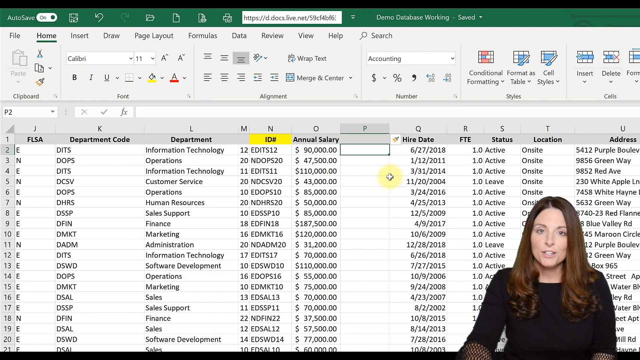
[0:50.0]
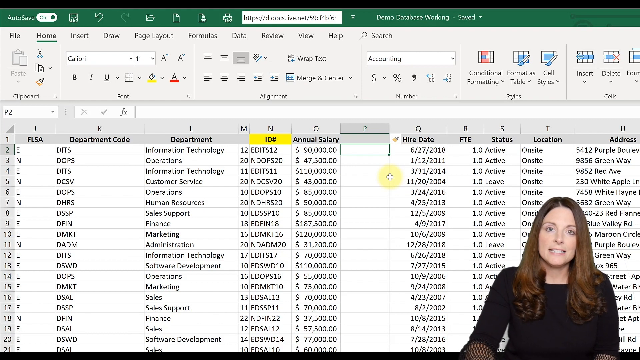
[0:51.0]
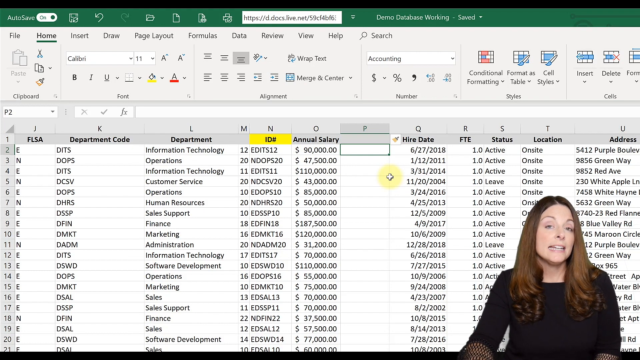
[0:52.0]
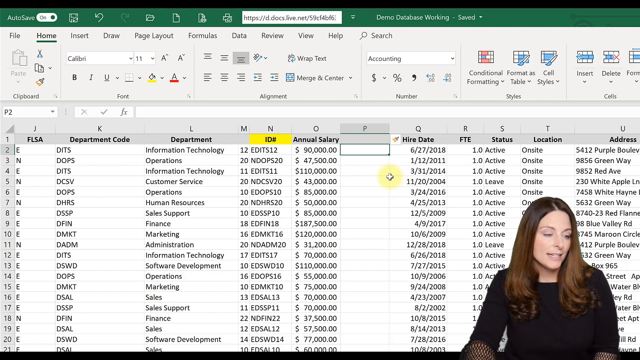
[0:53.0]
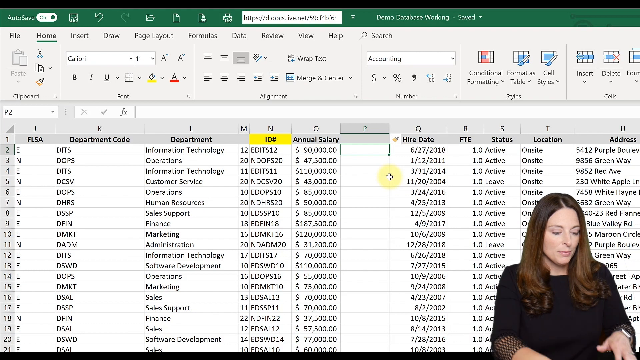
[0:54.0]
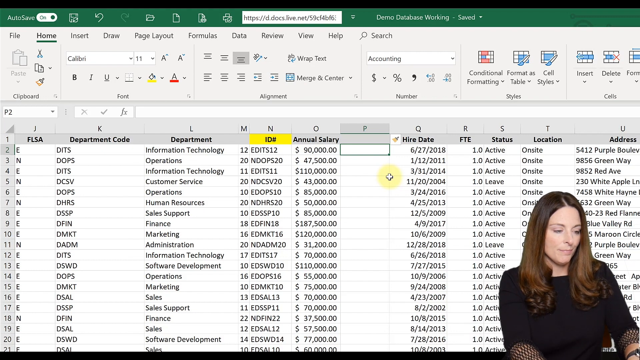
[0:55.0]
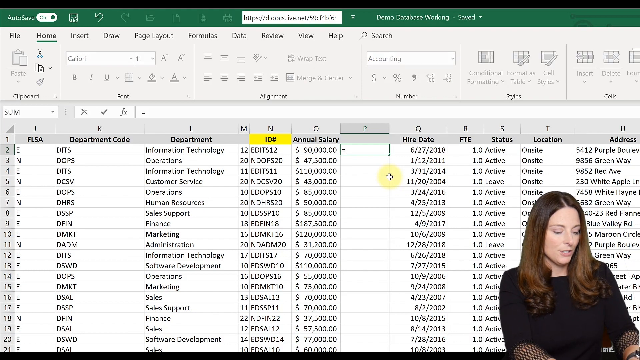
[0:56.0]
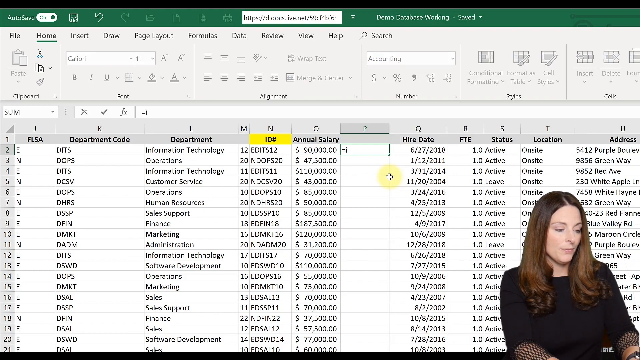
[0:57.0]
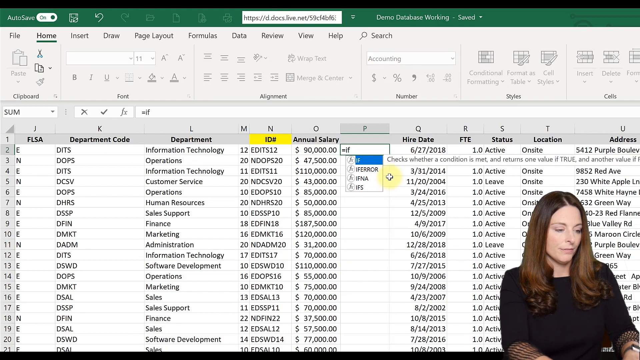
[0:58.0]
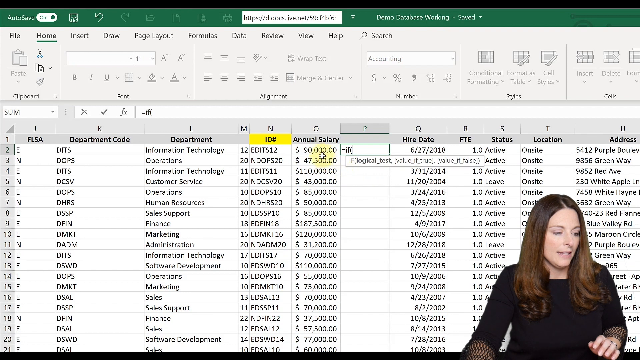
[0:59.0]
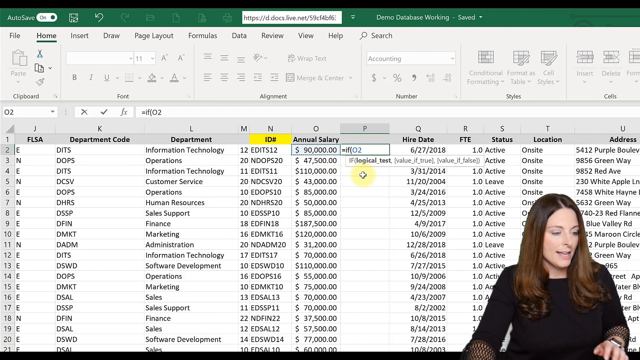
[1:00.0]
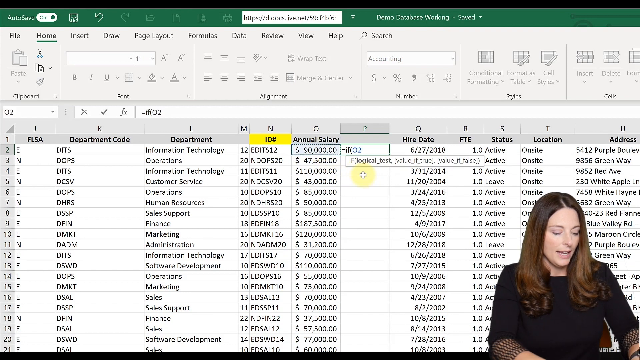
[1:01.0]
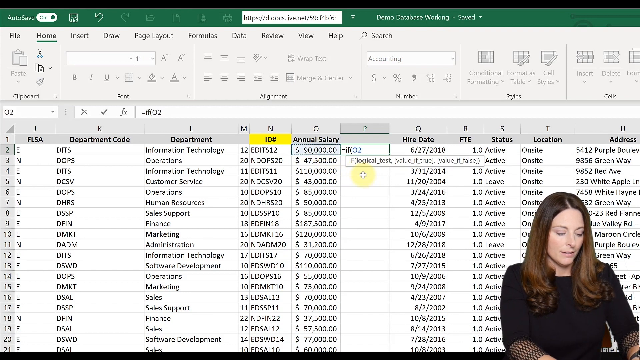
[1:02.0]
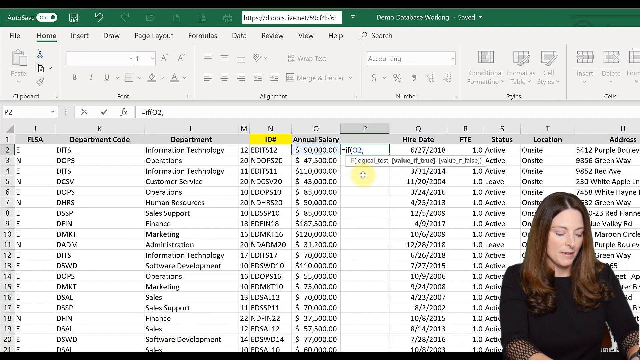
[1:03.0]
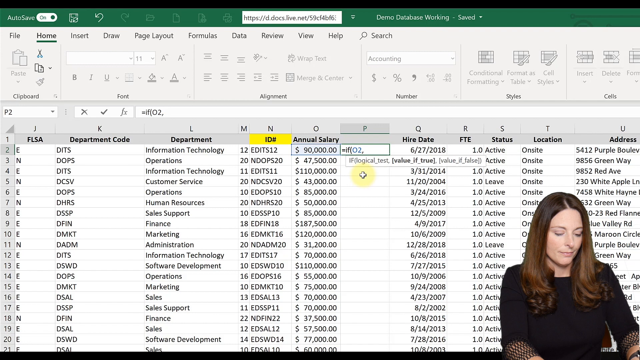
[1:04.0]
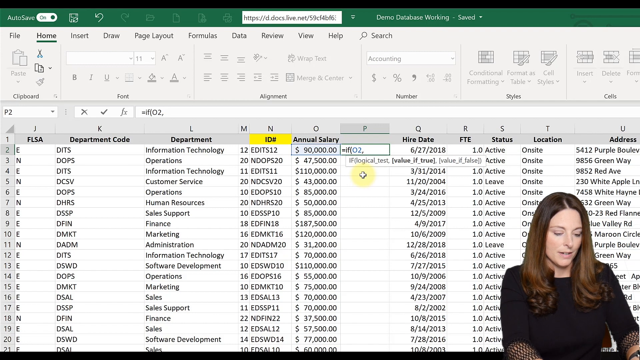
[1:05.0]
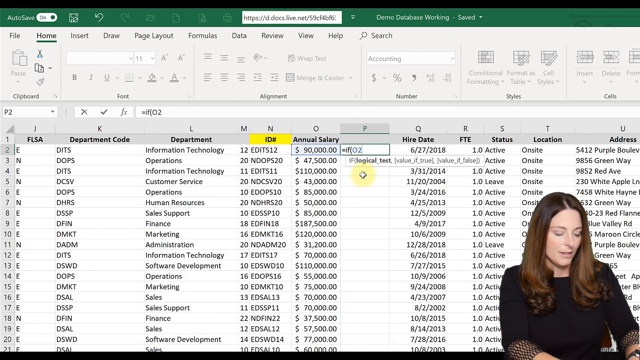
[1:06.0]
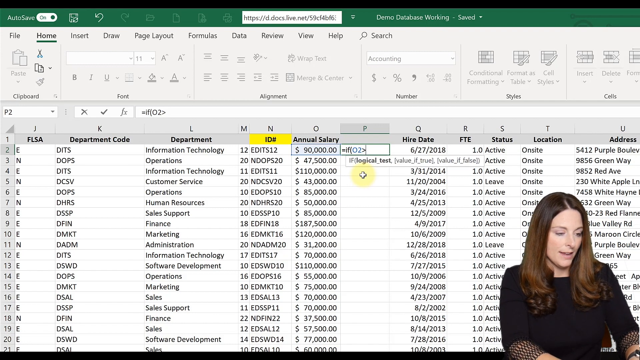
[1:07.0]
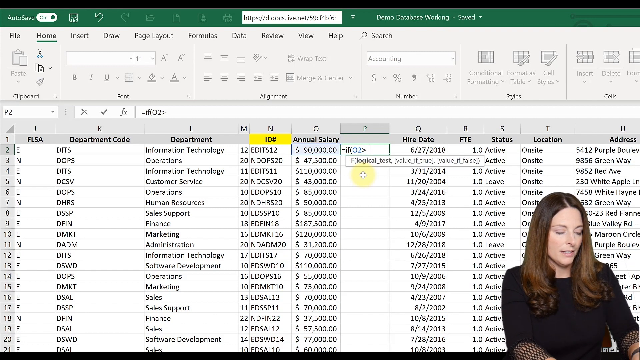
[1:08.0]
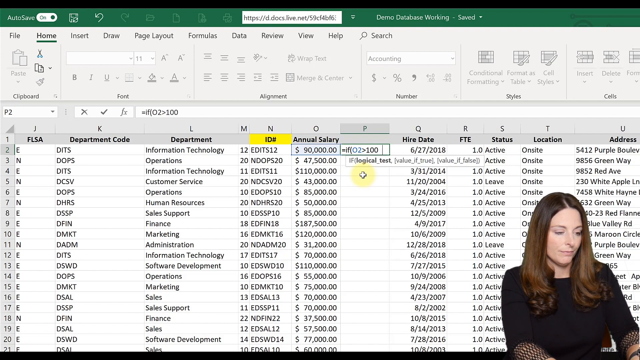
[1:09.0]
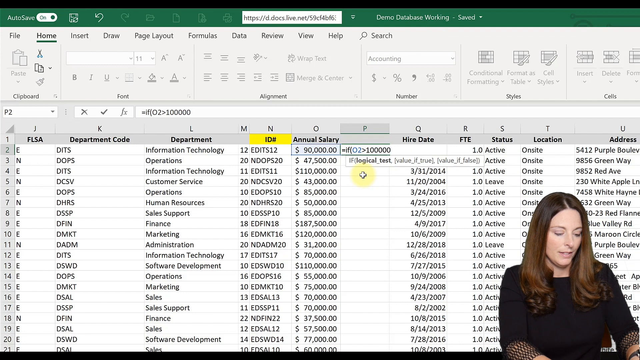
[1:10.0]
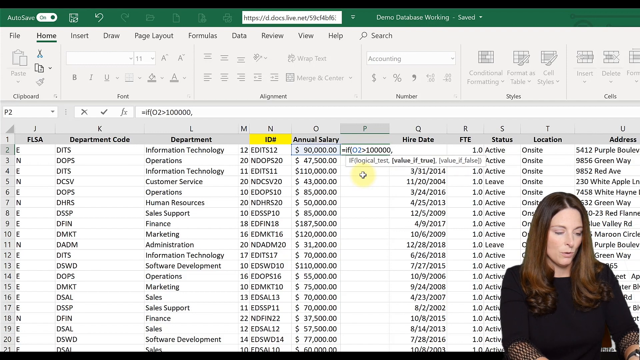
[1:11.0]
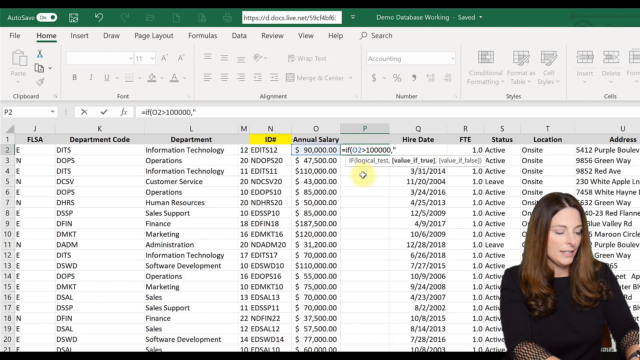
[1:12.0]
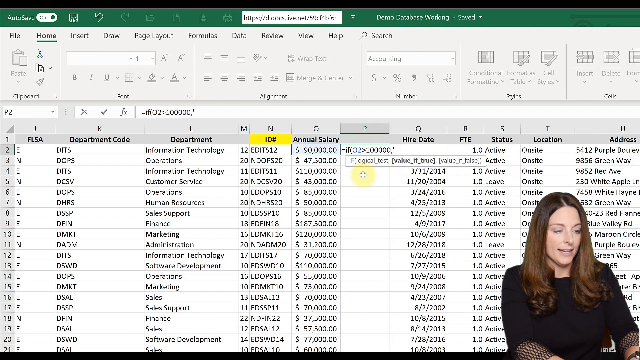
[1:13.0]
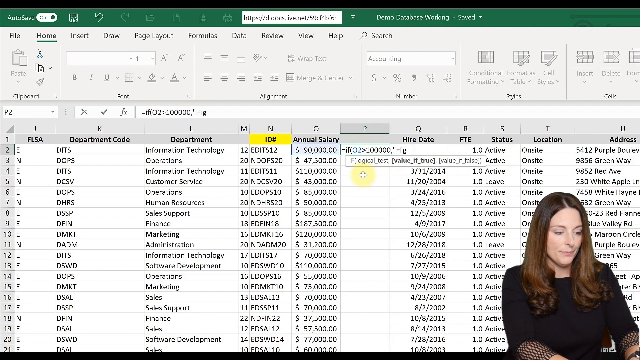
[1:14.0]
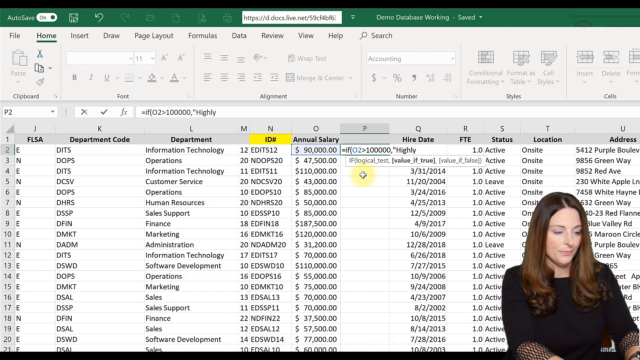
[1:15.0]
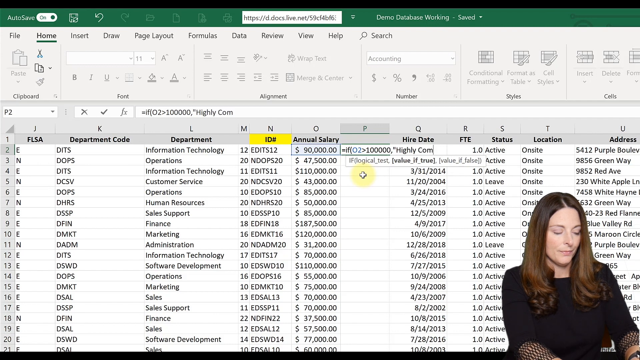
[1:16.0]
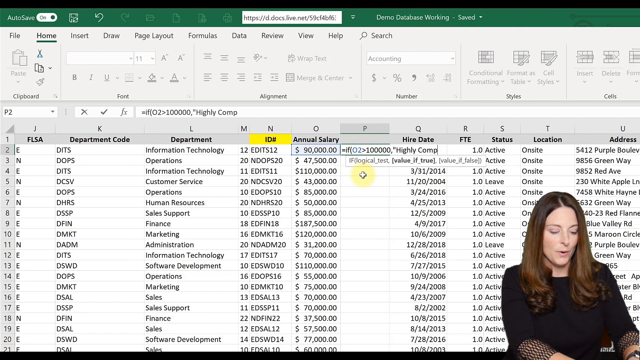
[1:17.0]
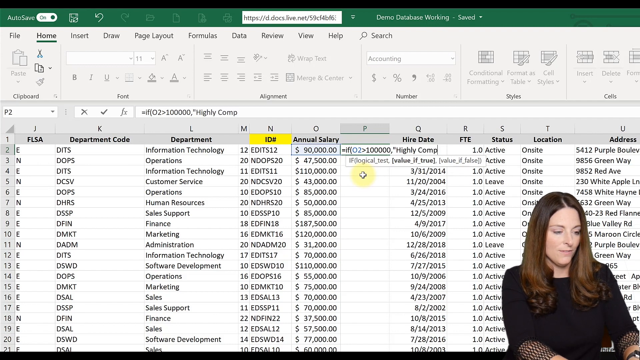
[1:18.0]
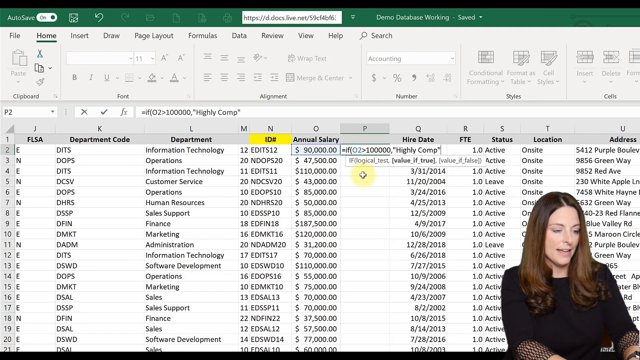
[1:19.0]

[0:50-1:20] An Excel spreadsheet is in the background, and in the right corner is a video of a woman with brown hair and a black shirt who is talking. The newly added column P is empty, but its first square, in the second row, is highlighted in green. To the left is column O, labeled "Annual Salary", and to the right is column Q, labeled "Hire Date". As she talks, she types text into the box in row two of column P; it looks like code, including an I, an F, and a parenthesis. Below it appears a guide reading "logical test, value if true, value if false". She moves a plus-sign-shaped cursor down into the column, hovering over row four, then adds more input: what looks like a zero, a two, and a comma. She removes the comma, adds a greater-than symbol and a space, then adds 00000, a comma, a quotation mark, "highly comp", and another quotation mark.